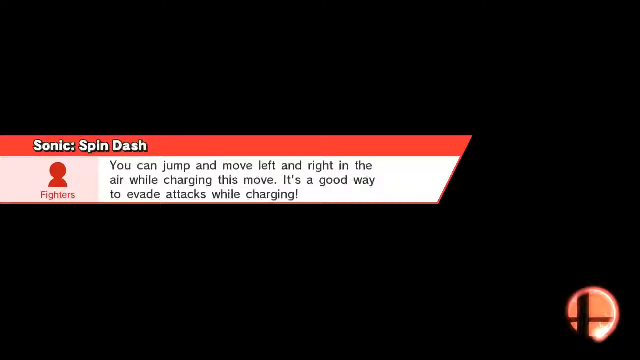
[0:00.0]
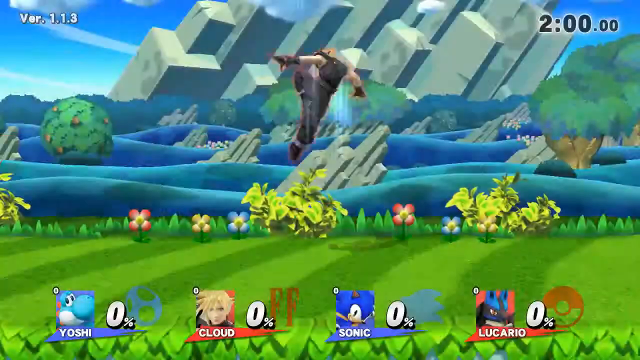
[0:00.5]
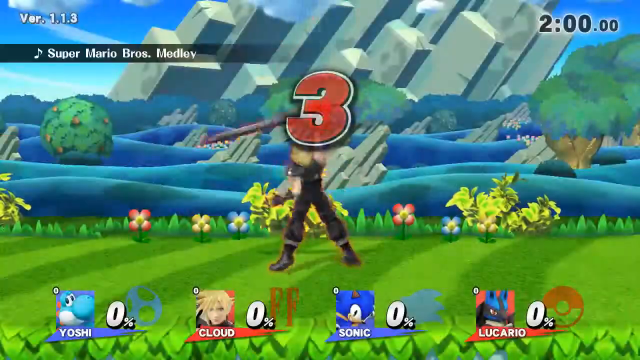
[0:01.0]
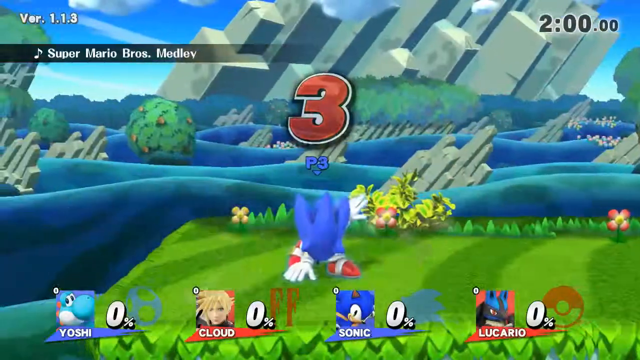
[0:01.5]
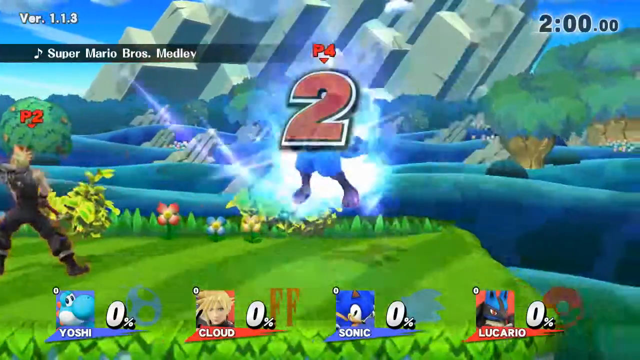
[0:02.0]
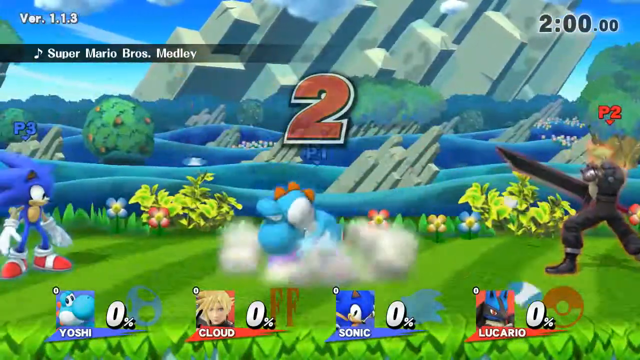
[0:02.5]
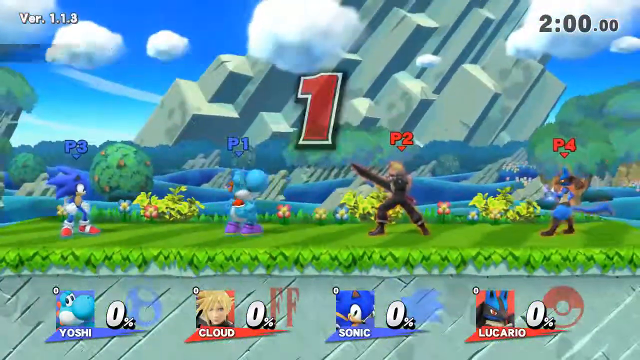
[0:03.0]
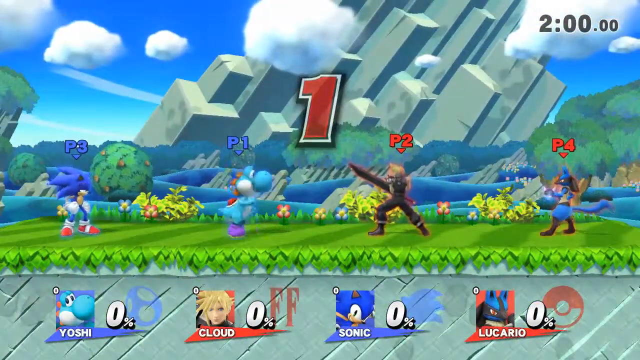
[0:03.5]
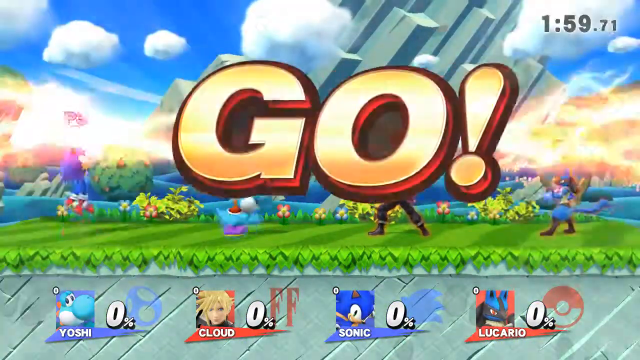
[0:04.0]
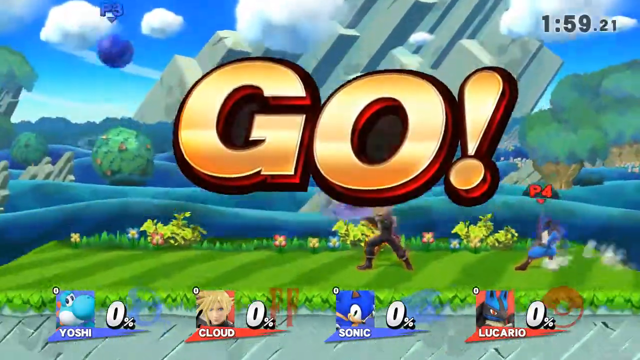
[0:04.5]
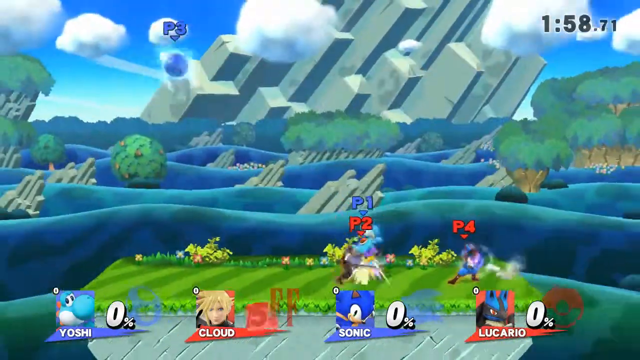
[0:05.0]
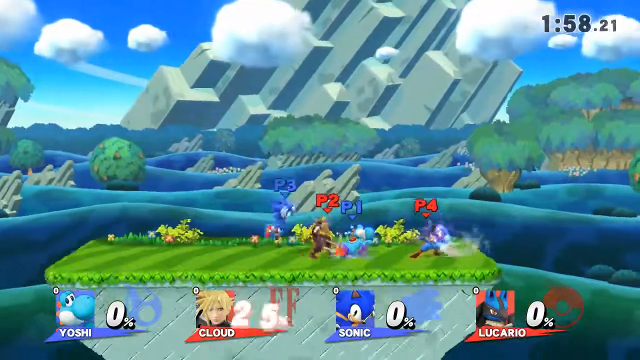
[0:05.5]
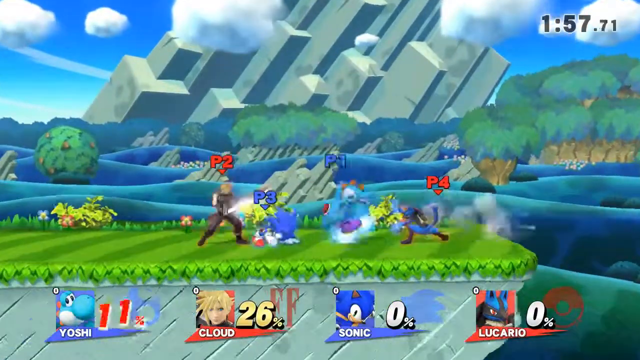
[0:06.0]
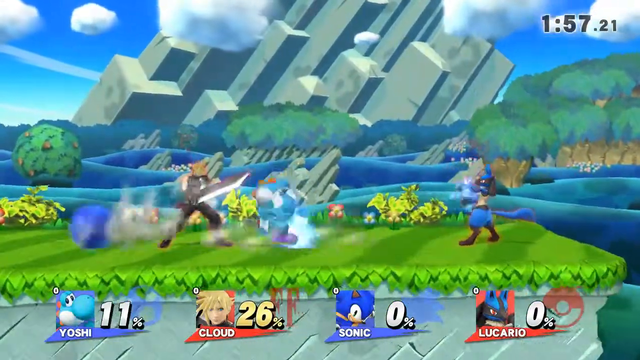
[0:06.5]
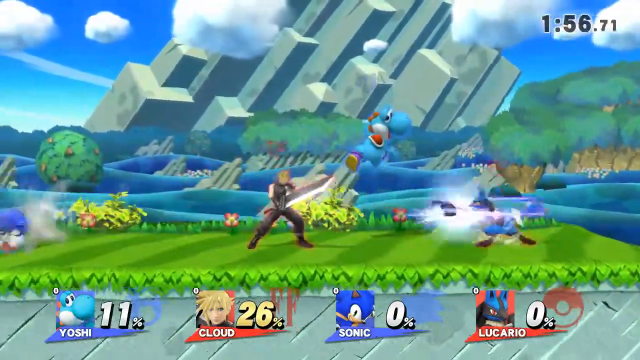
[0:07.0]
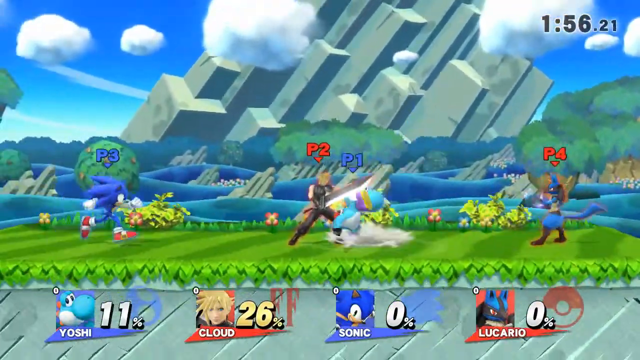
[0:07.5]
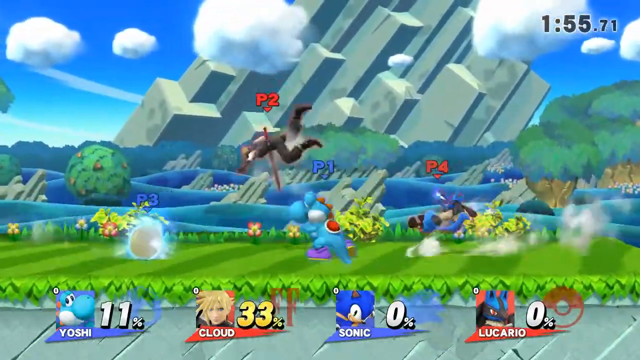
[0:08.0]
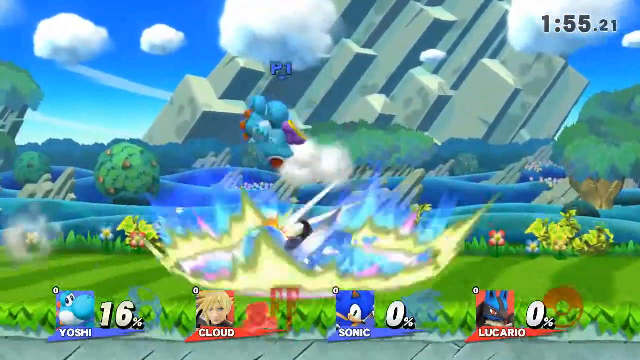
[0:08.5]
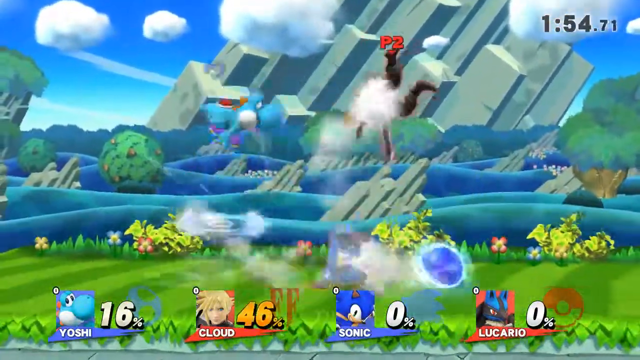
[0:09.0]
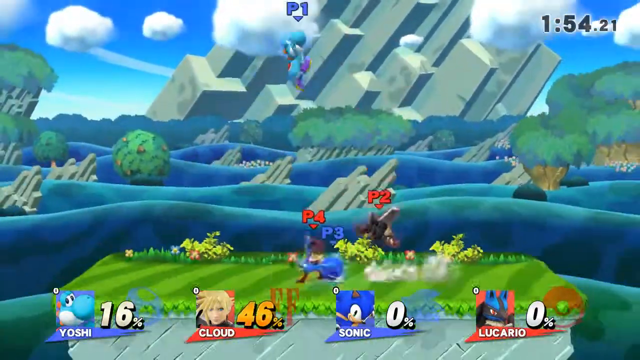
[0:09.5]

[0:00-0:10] A white and red box pops up that reads "Sonic Spin Dash Fighters. You can jump and move left and right in the air while charging this move. It's a good way to evade attacks while charging." The main scene follows; the game appears to be called Super Mario Brothers Medley, and a countdown runs "3, 2, 1, go." In the top left, the screen shows version 1.1.3 and that the fight will last two minutes. The characters are shown along the bottom: Yoshi, who is blue; Cloud, a male with blonde hair; Sonic, the little blue character; and apparently Lucario, who looks like some type of dragon or creature. The fight begins, with Yoshi and Sonic on one team and Cloud and Lucario on team two.